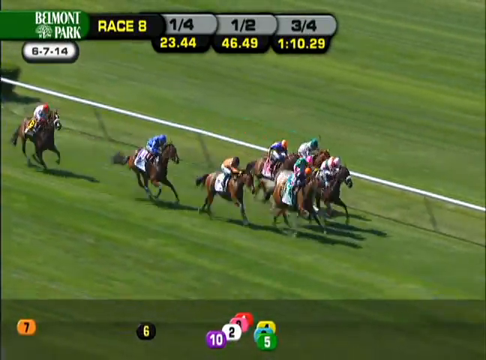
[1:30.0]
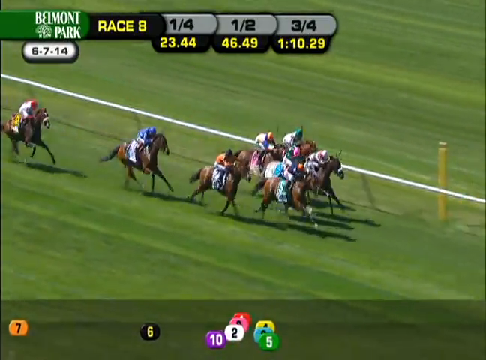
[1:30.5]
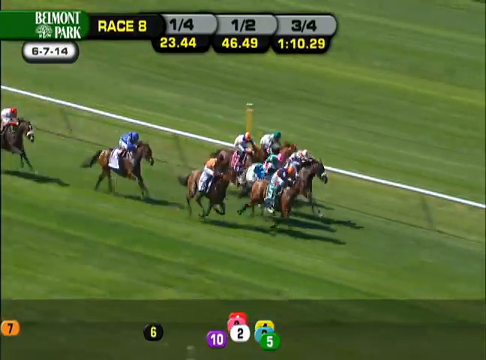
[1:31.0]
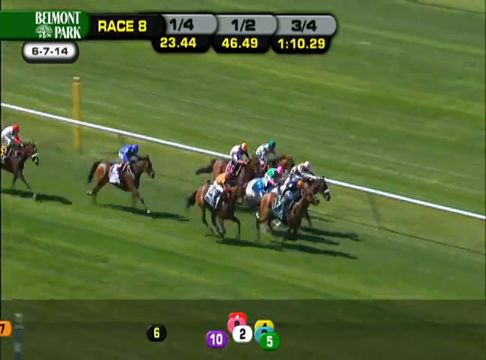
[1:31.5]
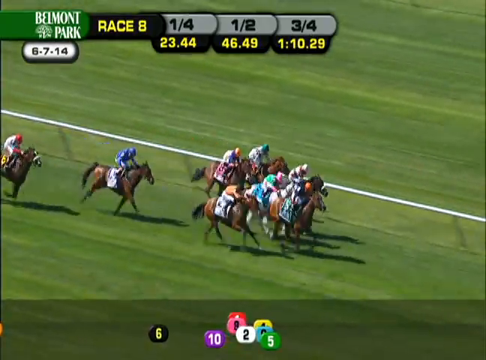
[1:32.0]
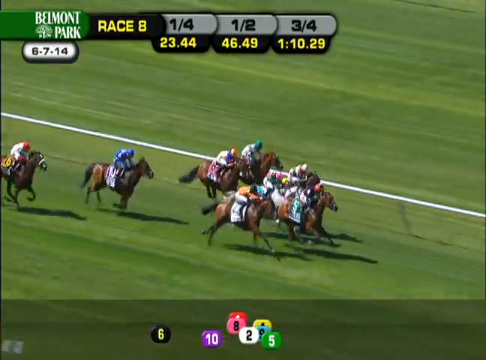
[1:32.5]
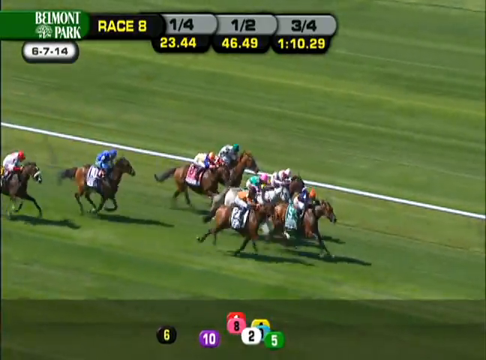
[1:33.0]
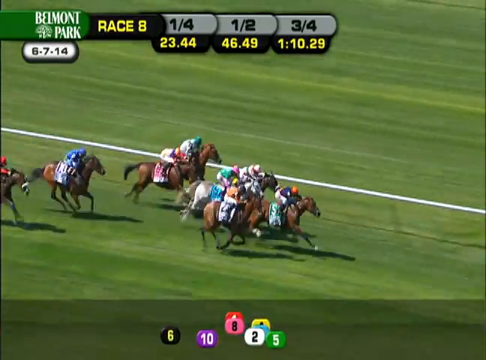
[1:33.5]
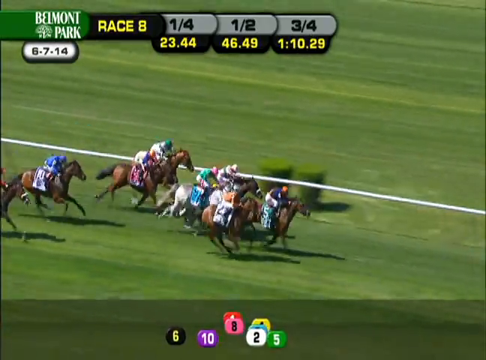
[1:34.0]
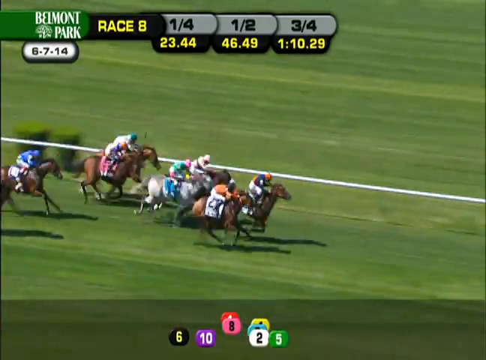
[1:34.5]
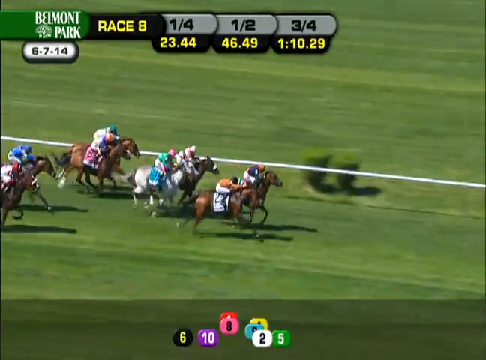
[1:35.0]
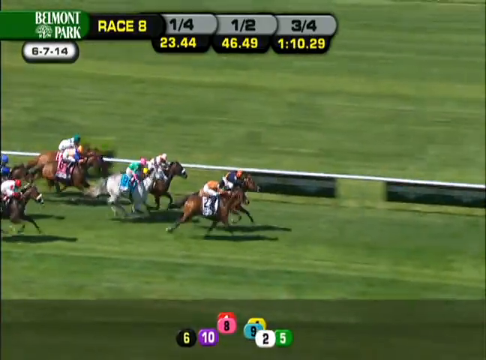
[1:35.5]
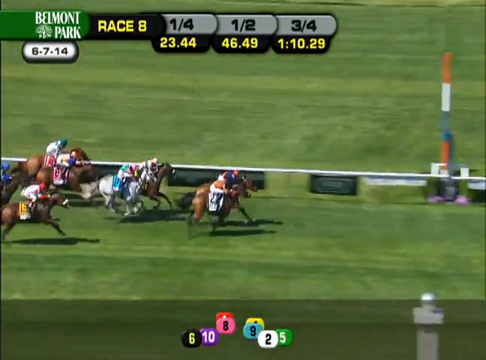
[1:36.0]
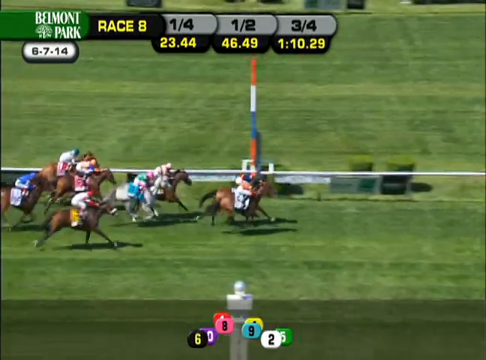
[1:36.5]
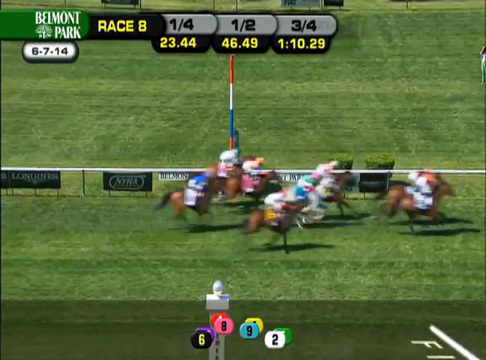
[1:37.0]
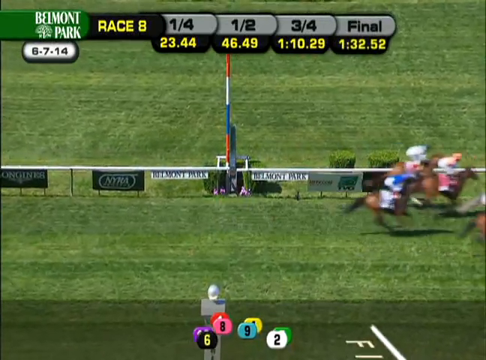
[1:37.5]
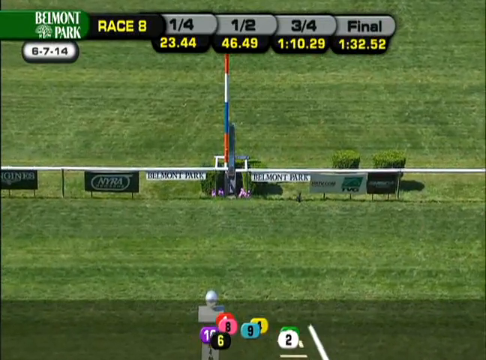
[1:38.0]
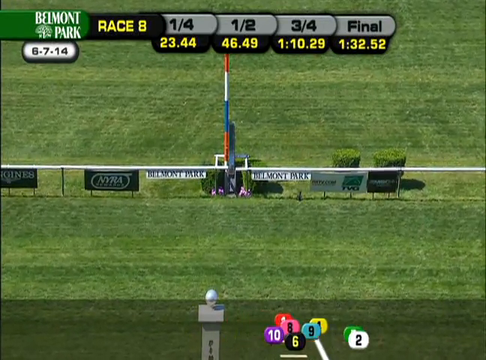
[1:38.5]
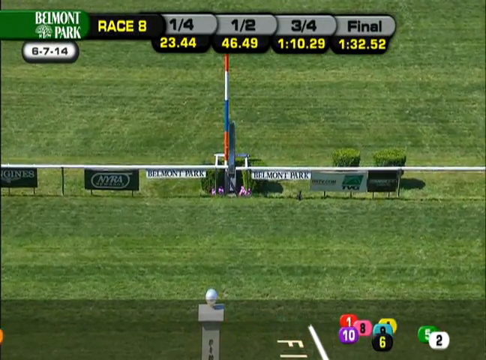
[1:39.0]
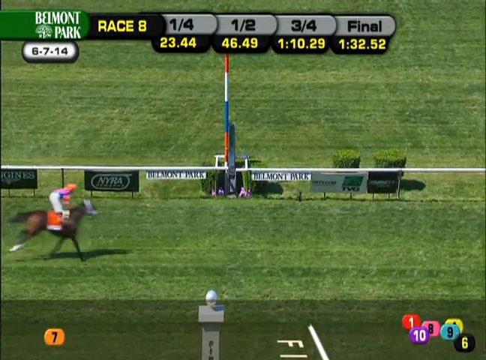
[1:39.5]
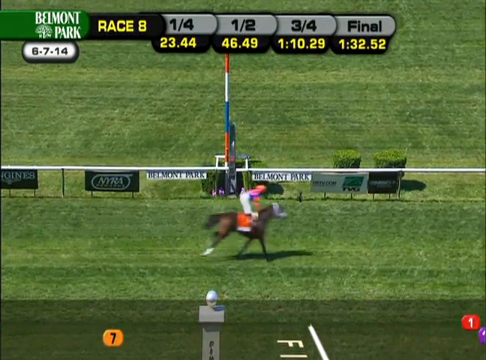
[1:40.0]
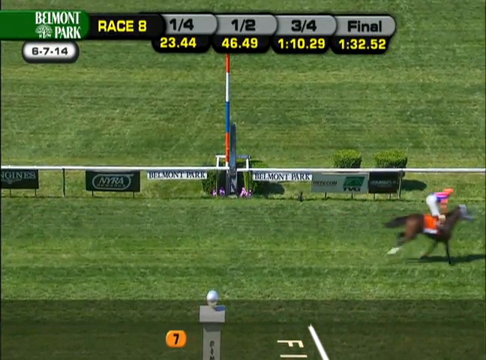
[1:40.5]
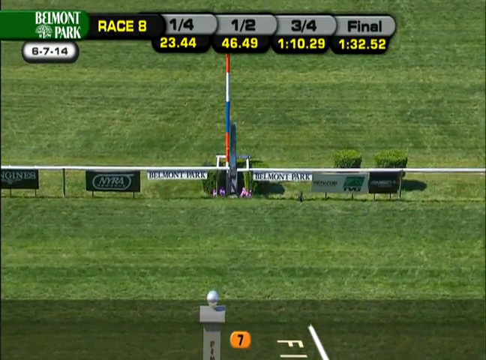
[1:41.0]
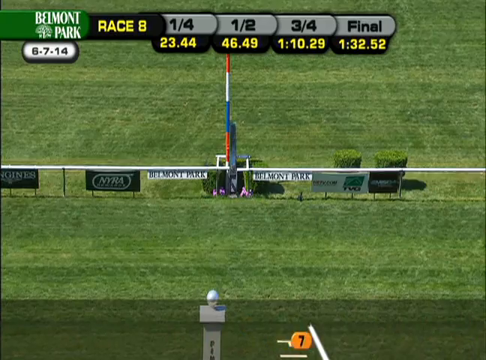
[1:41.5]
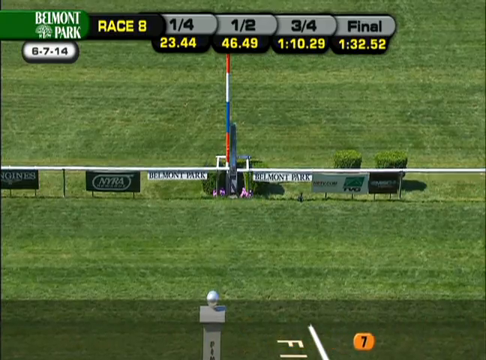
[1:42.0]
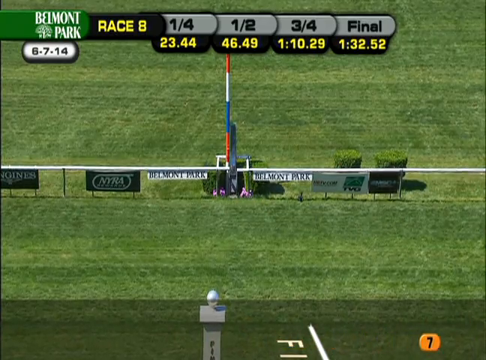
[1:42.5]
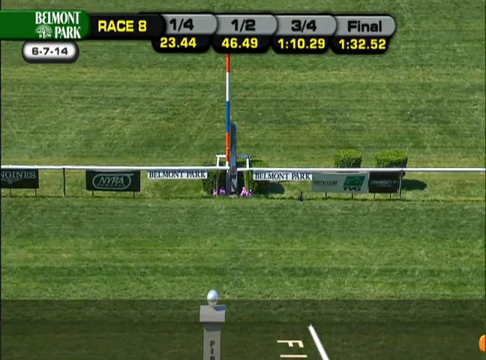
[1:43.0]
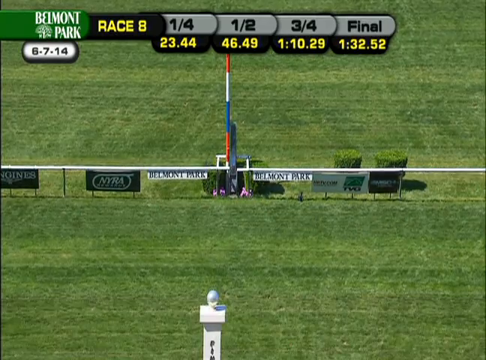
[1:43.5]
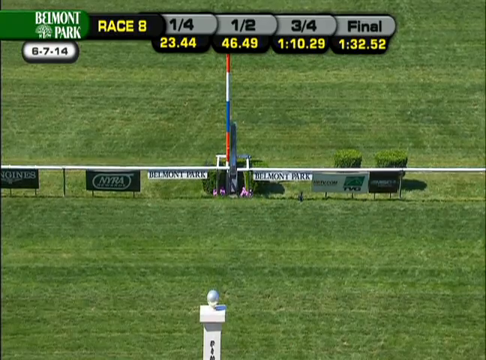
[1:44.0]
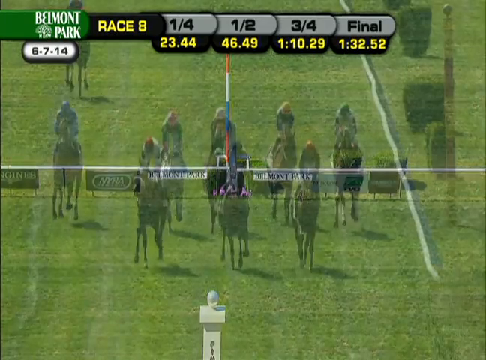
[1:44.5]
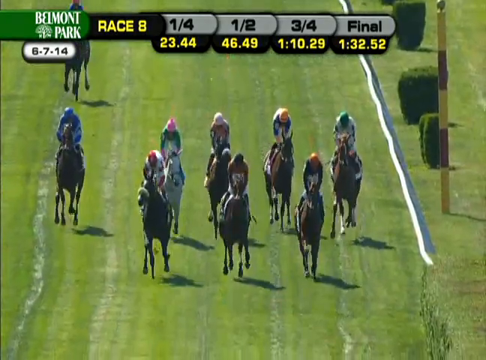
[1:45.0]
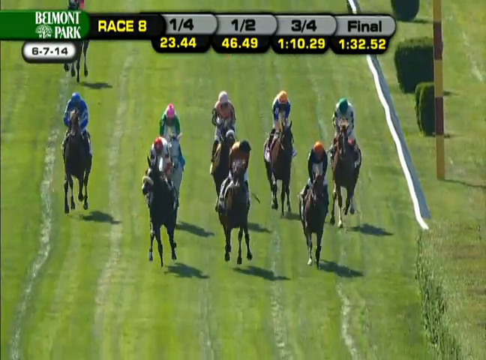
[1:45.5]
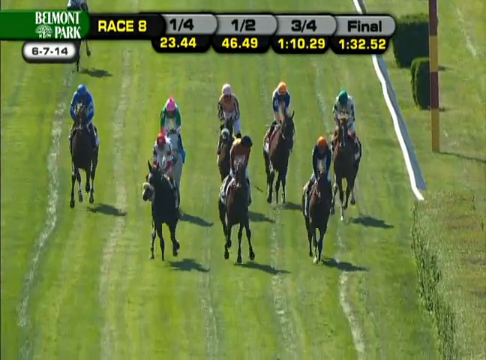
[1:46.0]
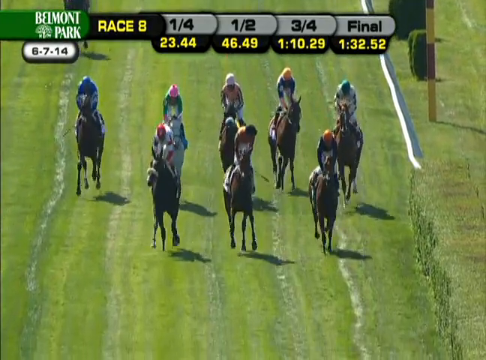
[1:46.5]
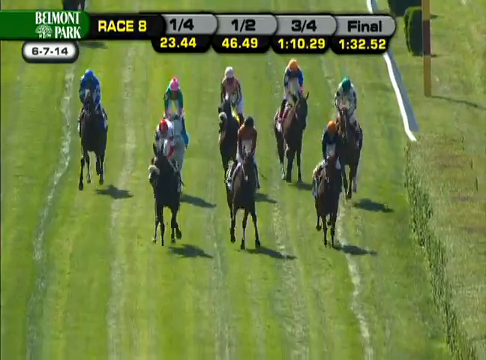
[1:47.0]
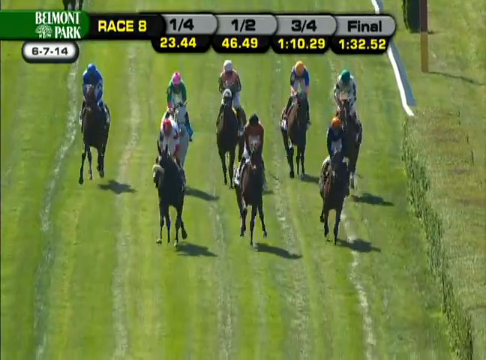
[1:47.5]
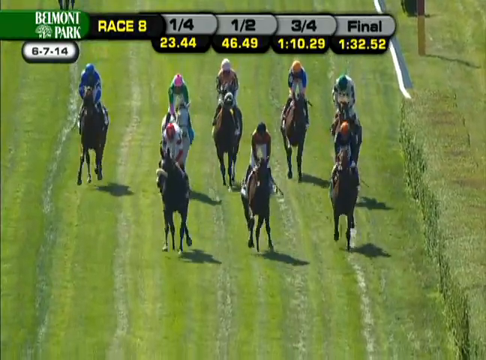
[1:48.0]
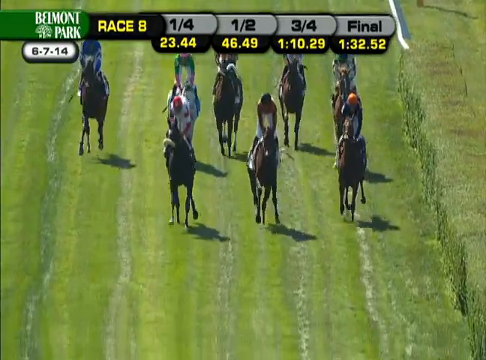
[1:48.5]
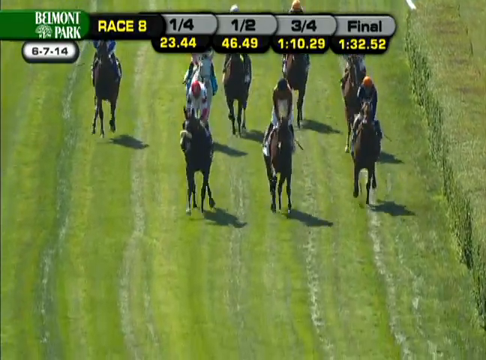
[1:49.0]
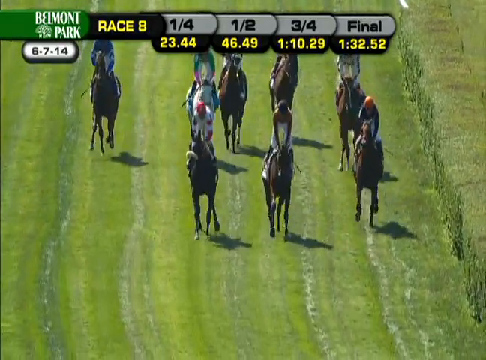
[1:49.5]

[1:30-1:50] The race at Belmont Park on June 7th, 2014, race number 8, continues with 10 horses. Horse number 9, Discreet Mark, is the frontrunner and leads the pack. Each horse is ridden by a jockey wearing a different colored uniform and a different colored helmet. Along the edge of the very green course are a white guardrail and grass. The horses run down the straightaway, clustered close together, and finish with a final time of 1 minute and 32 seconds. A shot shows the horses running toward the camera after the race has ended, and the times for each quarter are shown: the first quarter in 23.44 seconds, the half in 46.49 seconds, three quarters in 1 minute and 10.29 seconds, and the final time of 1 minute and 32.52 seconds.